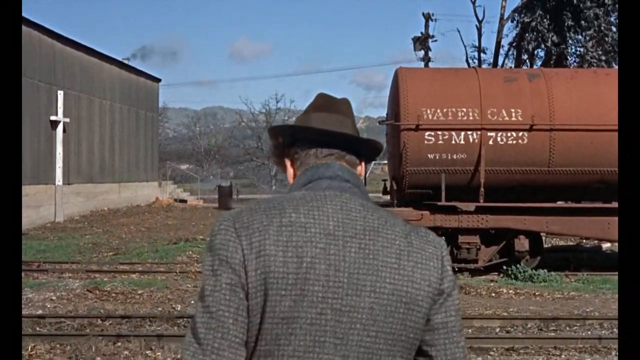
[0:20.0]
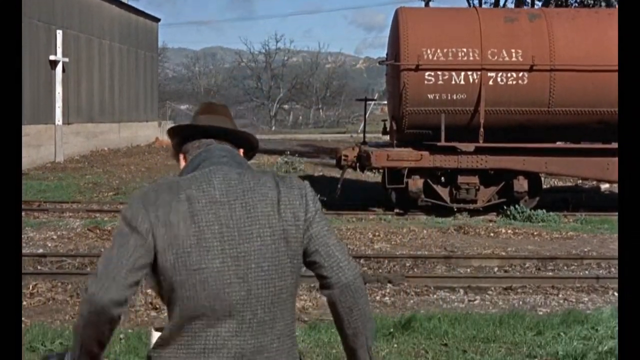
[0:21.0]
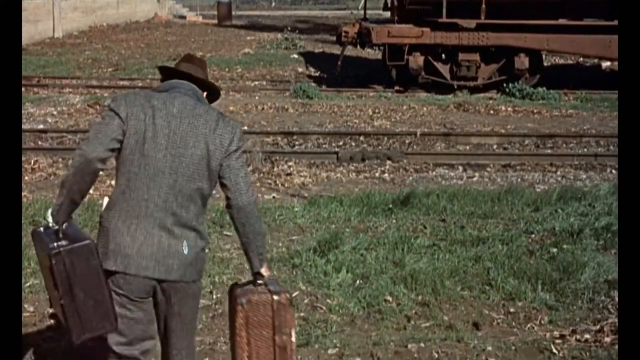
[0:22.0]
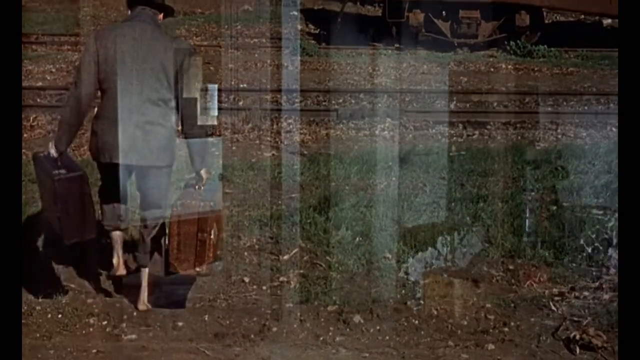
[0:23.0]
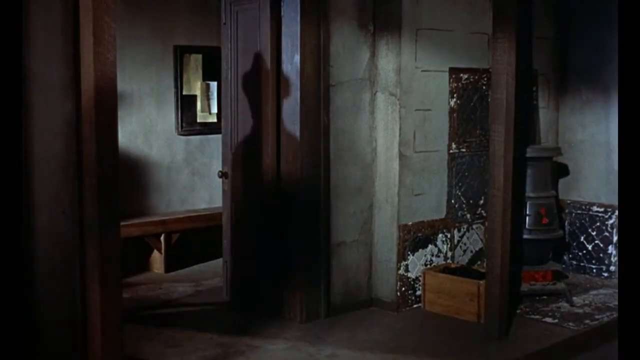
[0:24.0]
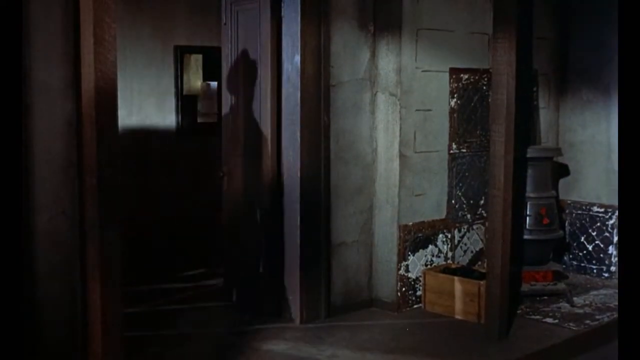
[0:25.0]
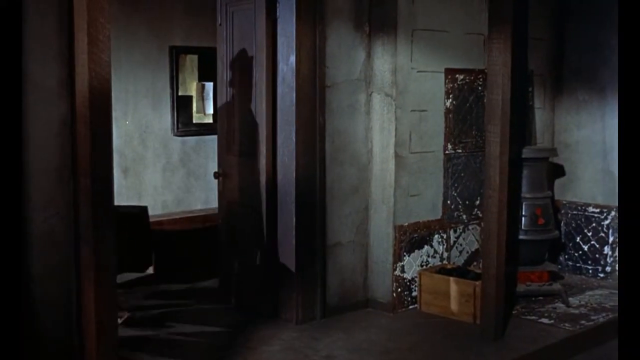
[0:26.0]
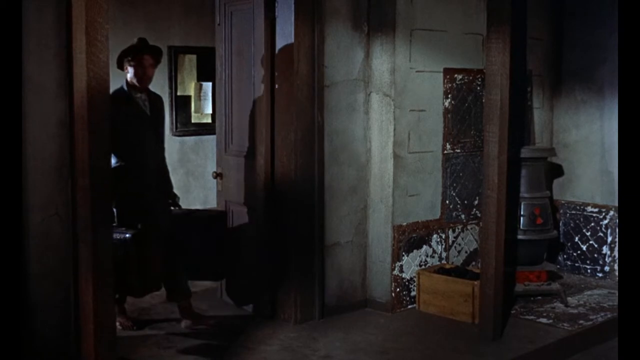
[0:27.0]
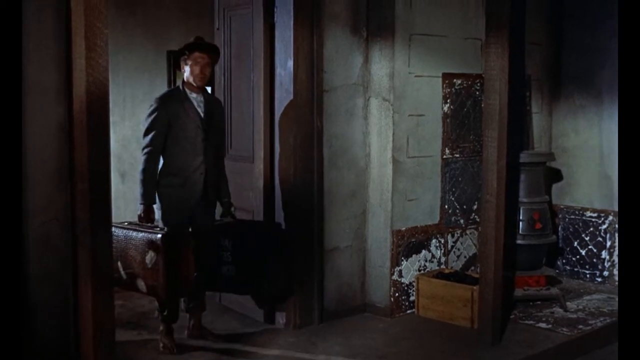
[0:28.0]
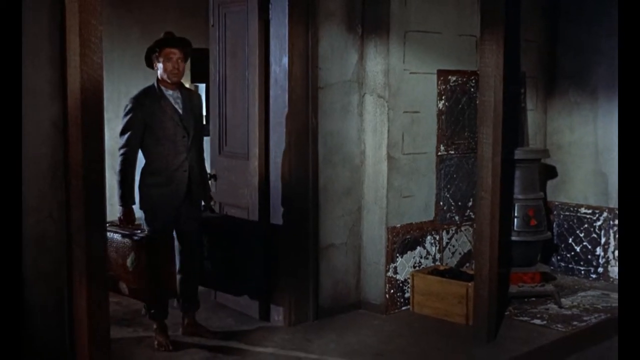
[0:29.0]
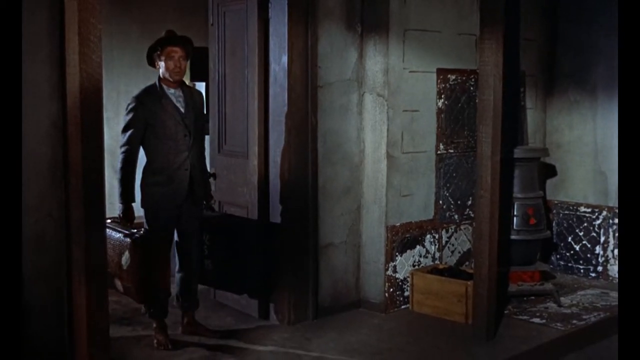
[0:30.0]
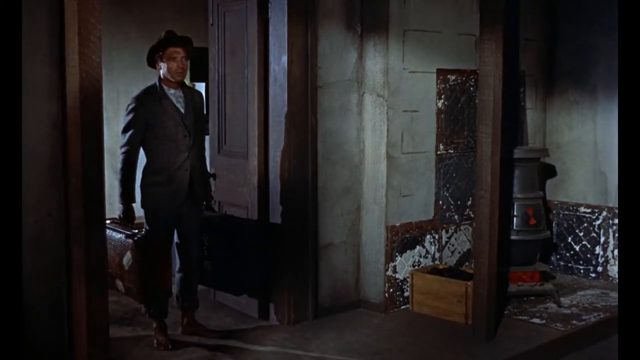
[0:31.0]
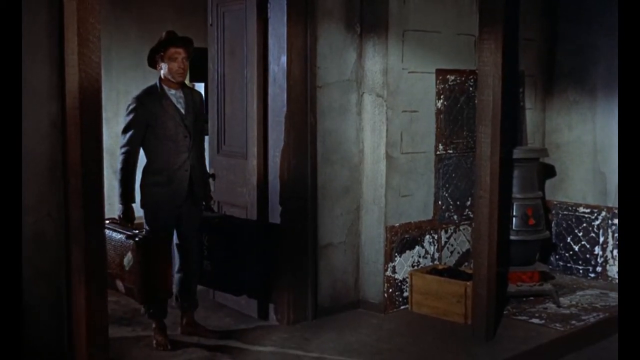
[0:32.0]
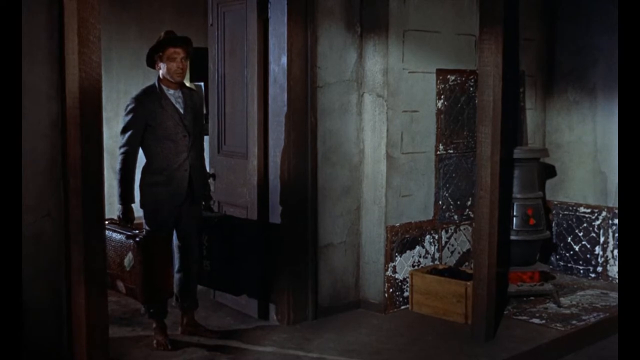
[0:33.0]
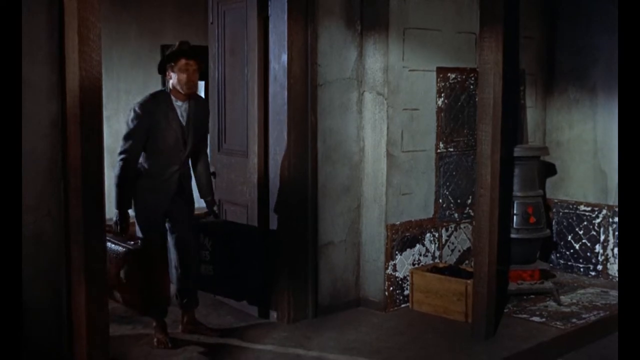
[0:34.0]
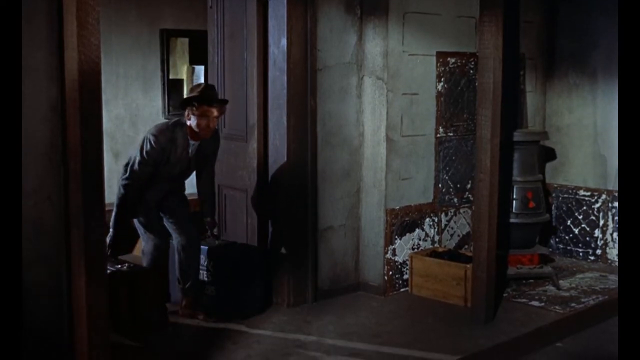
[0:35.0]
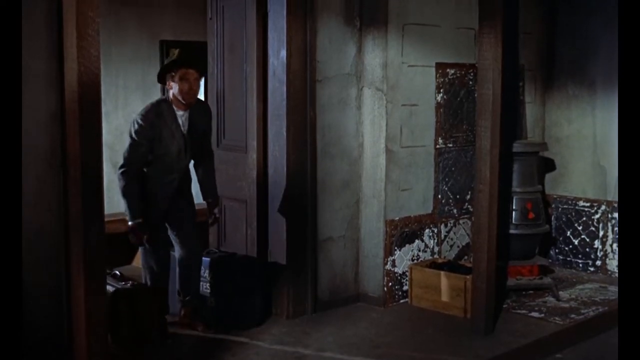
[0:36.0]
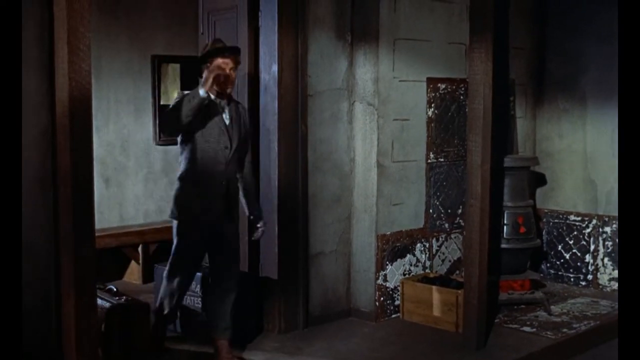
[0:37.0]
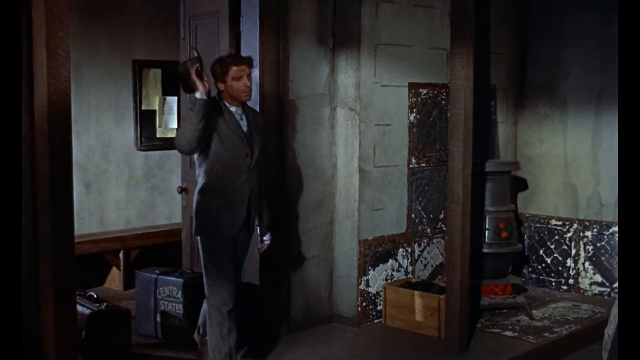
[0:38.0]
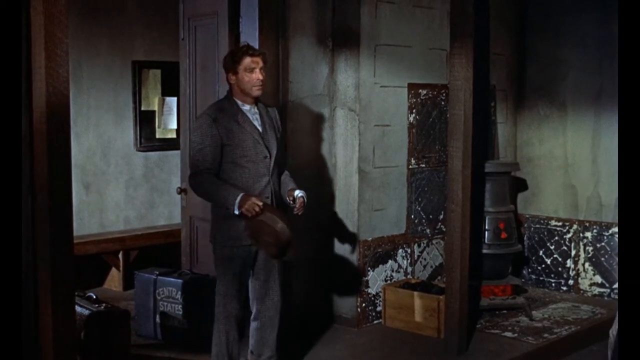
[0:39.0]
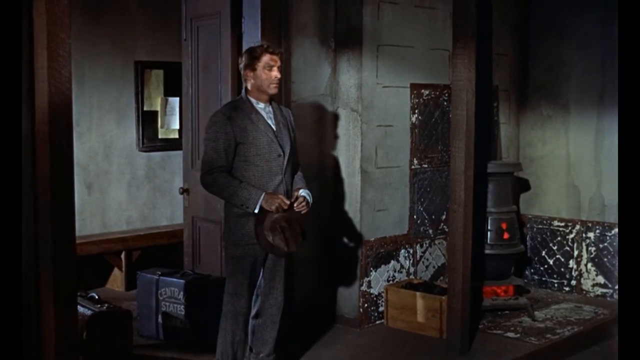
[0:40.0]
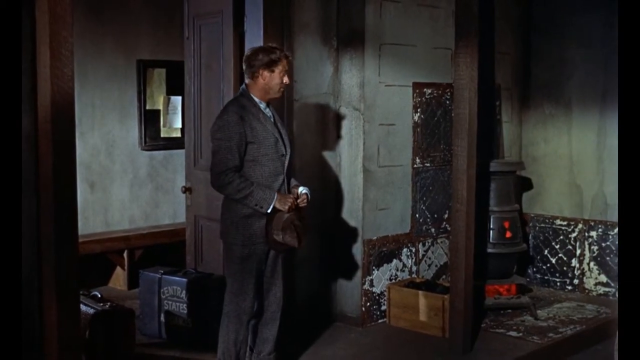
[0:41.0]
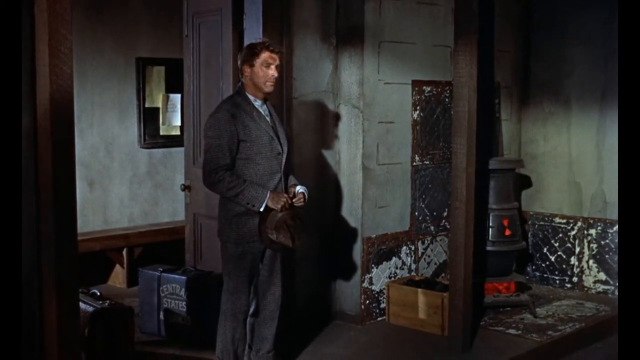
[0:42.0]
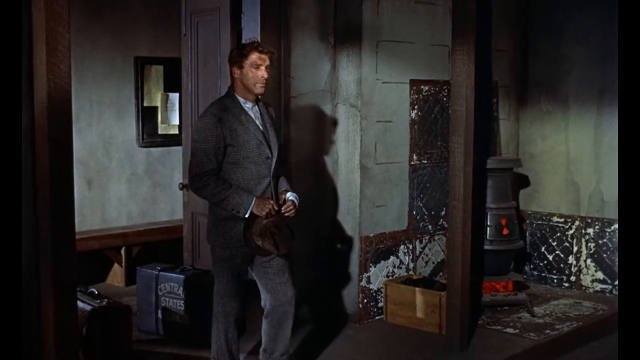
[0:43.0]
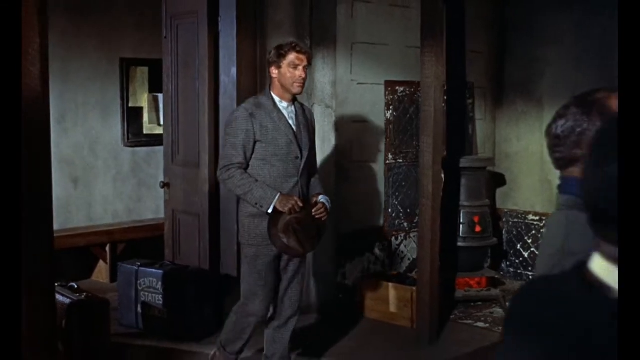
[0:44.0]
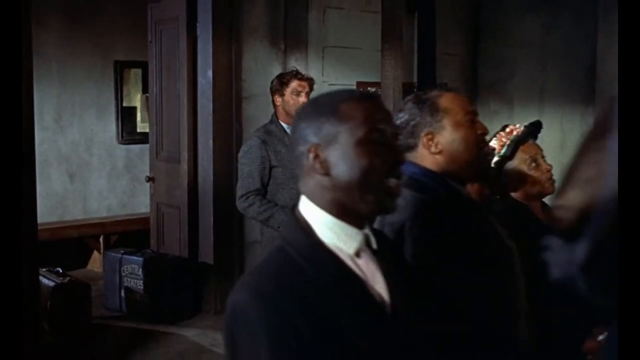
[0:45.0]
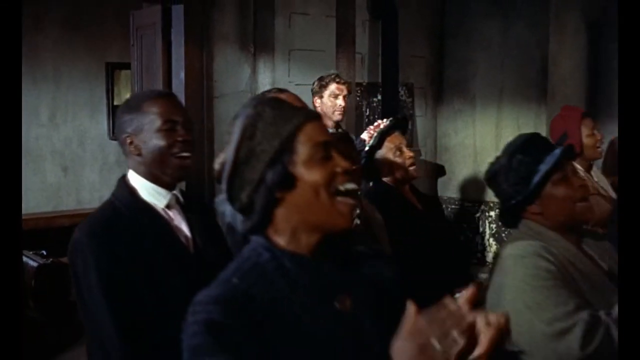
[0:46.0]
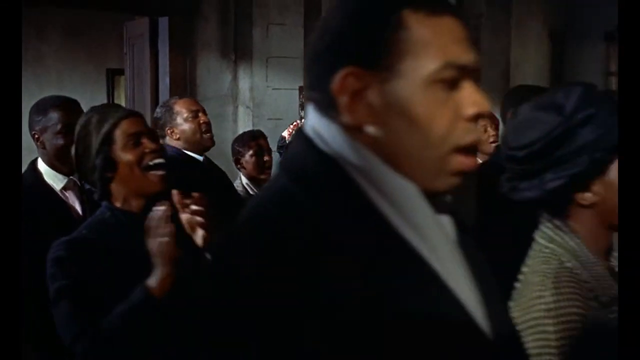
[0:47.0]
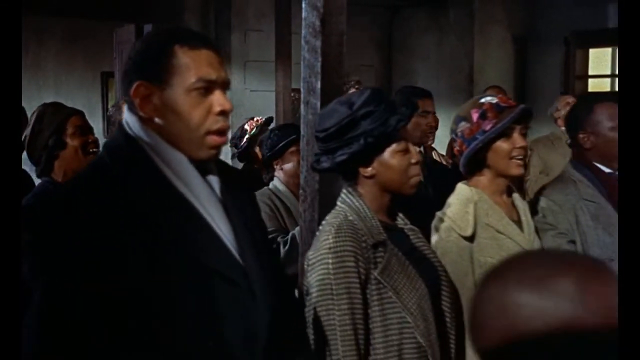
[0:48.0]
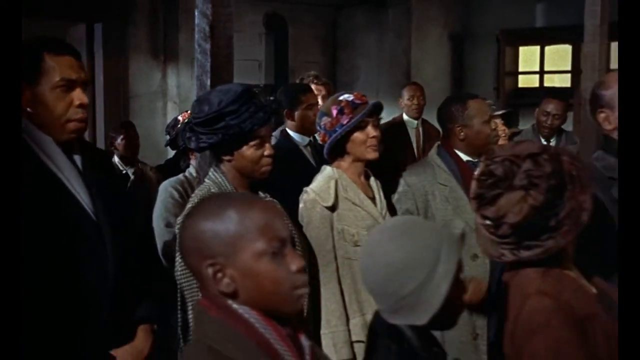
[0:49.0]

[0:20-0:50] The man comes up to an area with a little building that has a cross outside, possibly a church. He walks quickly down the tracks toward the building, and as he walks in, his face scans the room as he looks around in some surprise. He stands there looking at the room for a second, then puts his suitcases down on the ground, takes his hat off and walks towards the room. He looks right at the area next to him, where there appears to be a little wooden box and some sort of metal container. He walks through, and the room holds a bunch of people who are singing; there seem to be many different people, mostly black people. They all seem very happy singing along to a song, in stark contrast to the man's expression.